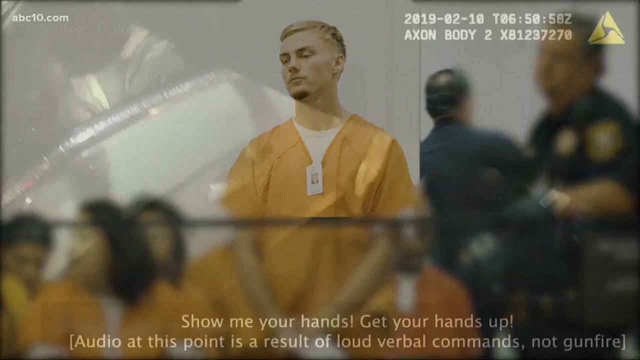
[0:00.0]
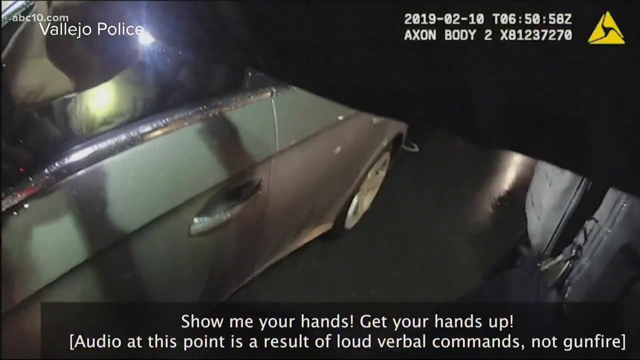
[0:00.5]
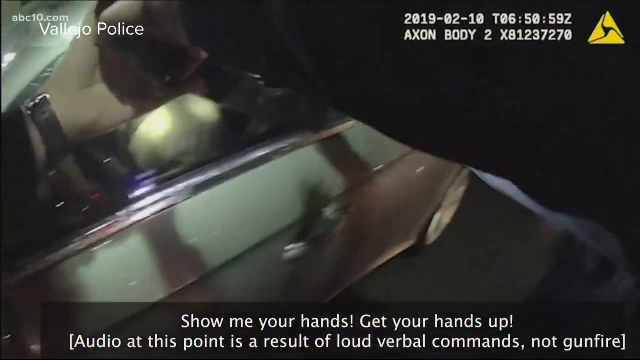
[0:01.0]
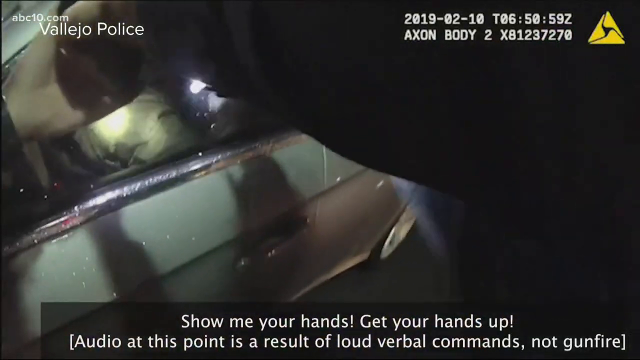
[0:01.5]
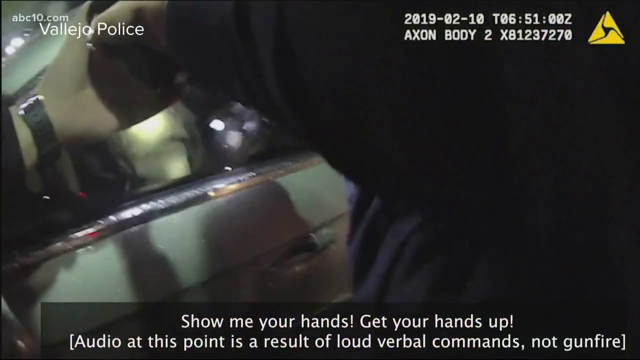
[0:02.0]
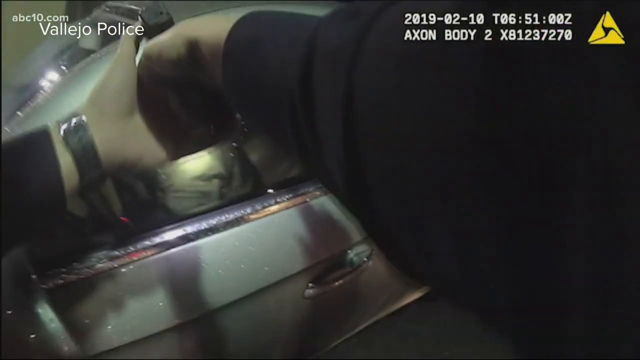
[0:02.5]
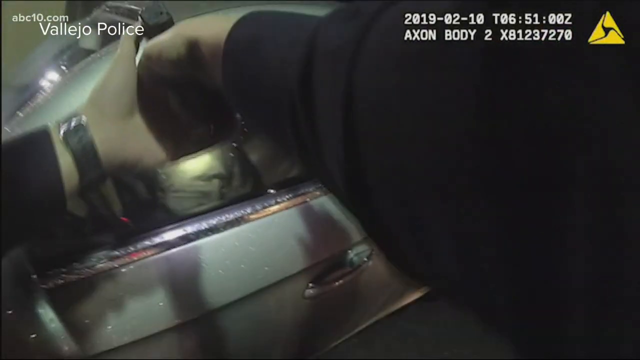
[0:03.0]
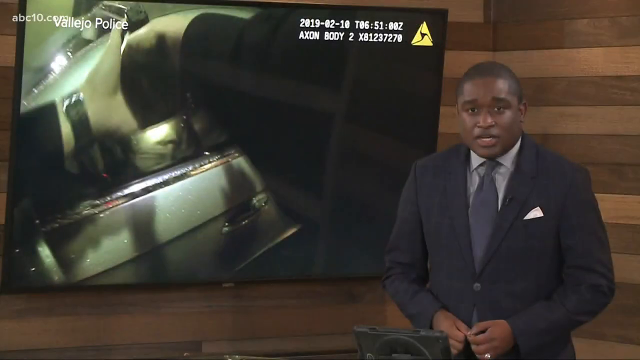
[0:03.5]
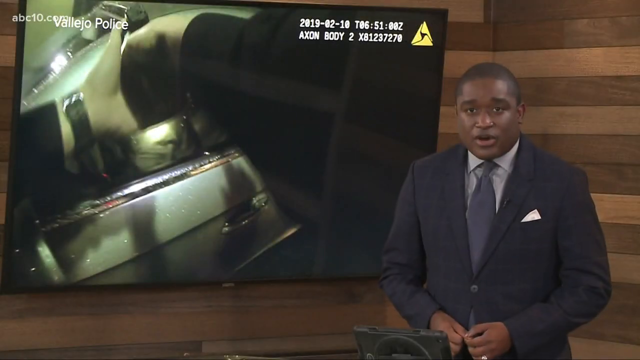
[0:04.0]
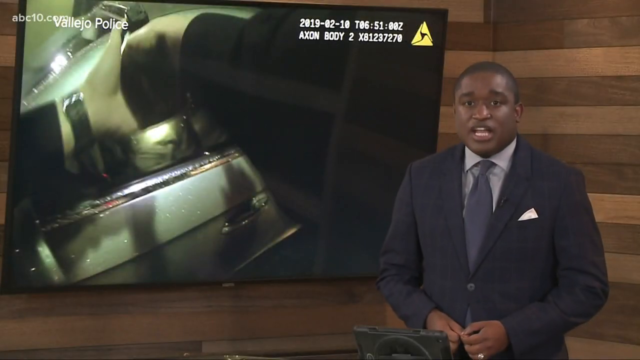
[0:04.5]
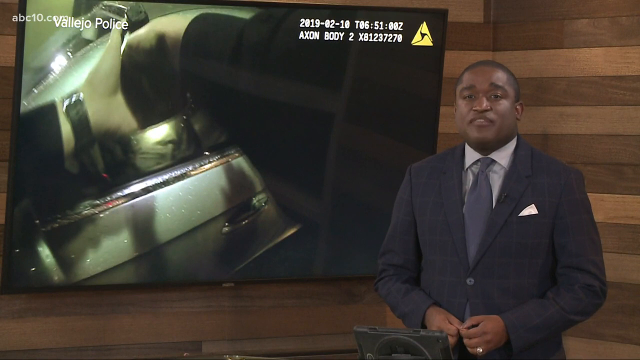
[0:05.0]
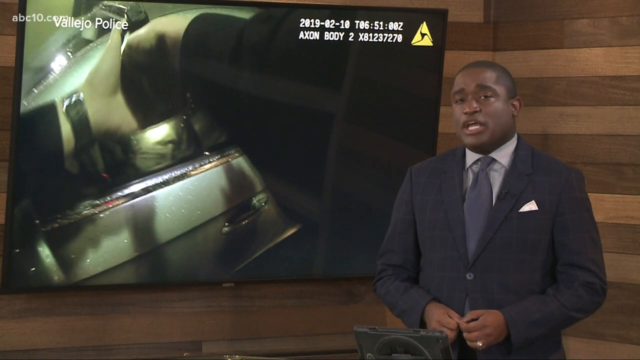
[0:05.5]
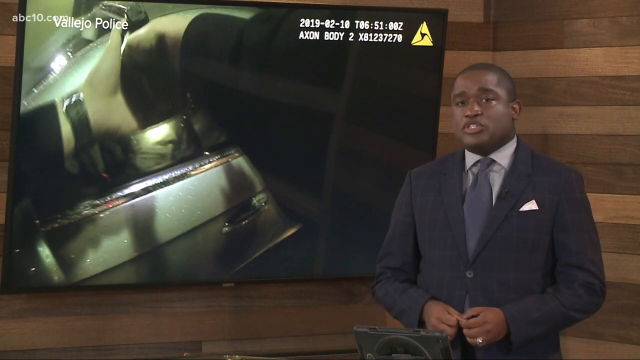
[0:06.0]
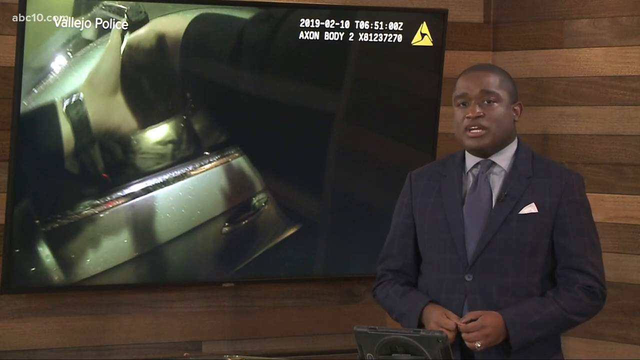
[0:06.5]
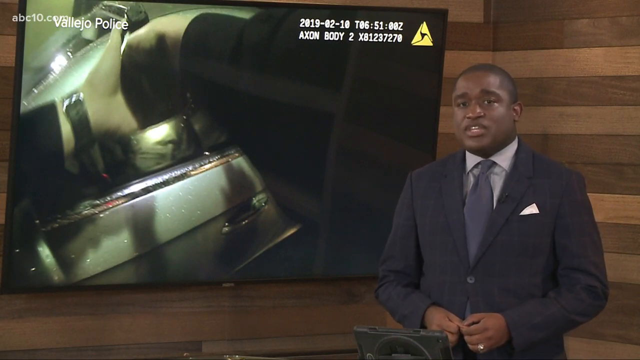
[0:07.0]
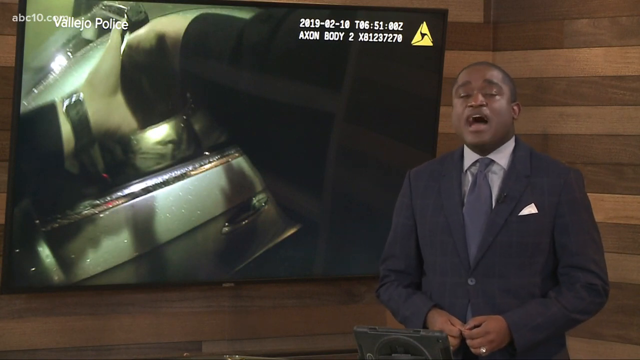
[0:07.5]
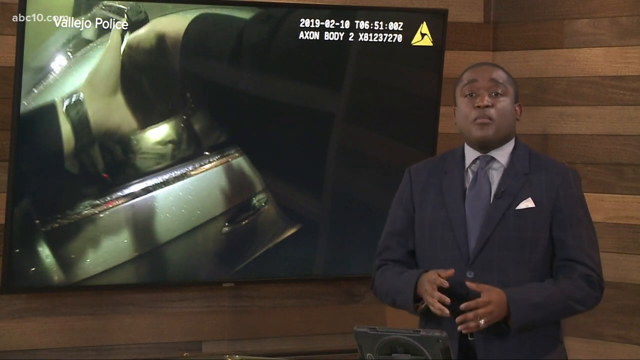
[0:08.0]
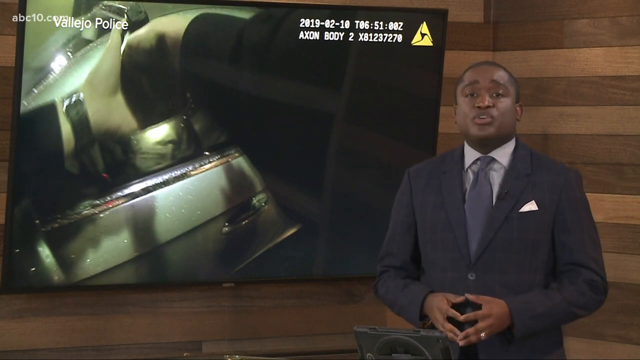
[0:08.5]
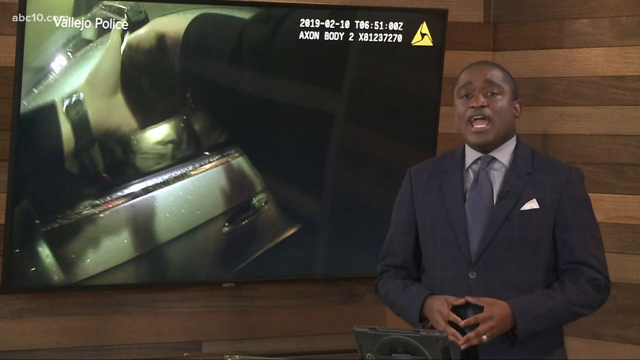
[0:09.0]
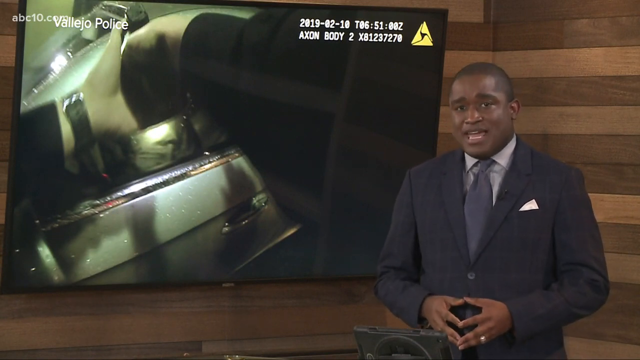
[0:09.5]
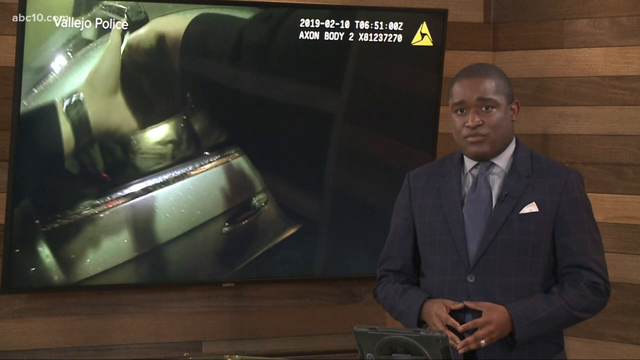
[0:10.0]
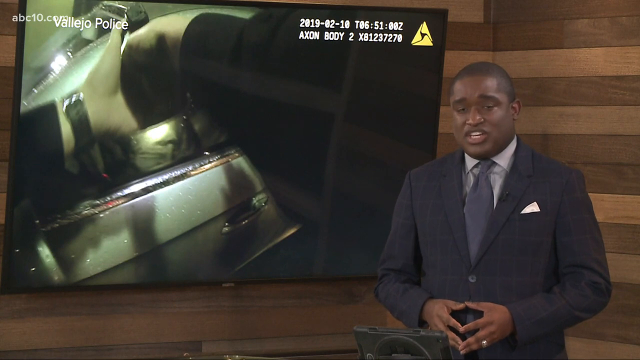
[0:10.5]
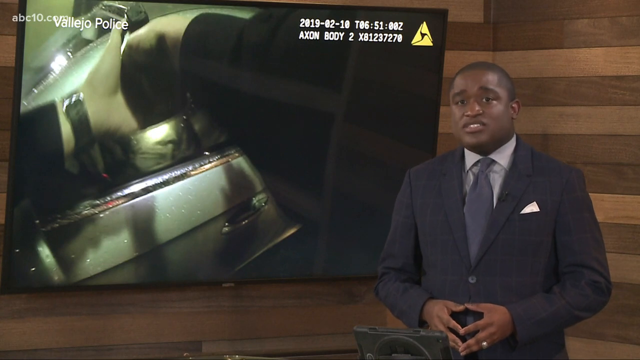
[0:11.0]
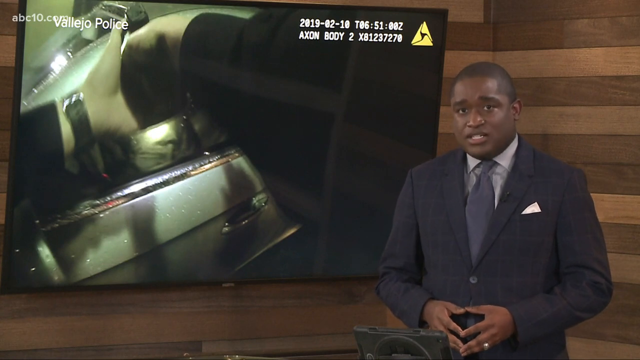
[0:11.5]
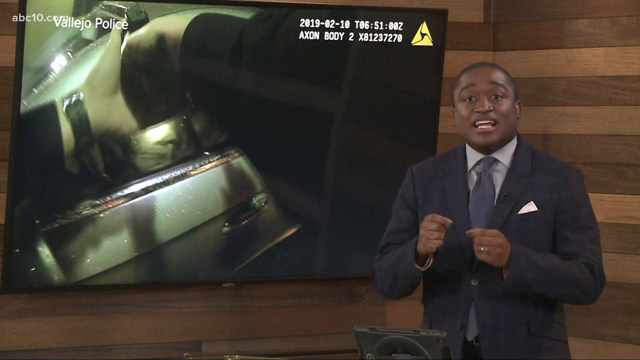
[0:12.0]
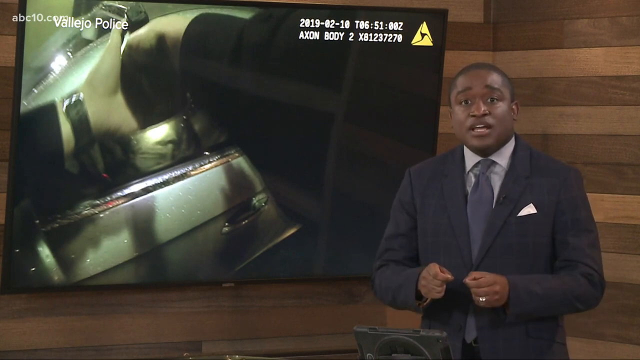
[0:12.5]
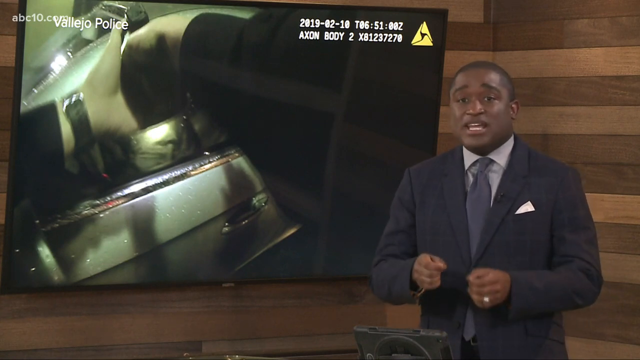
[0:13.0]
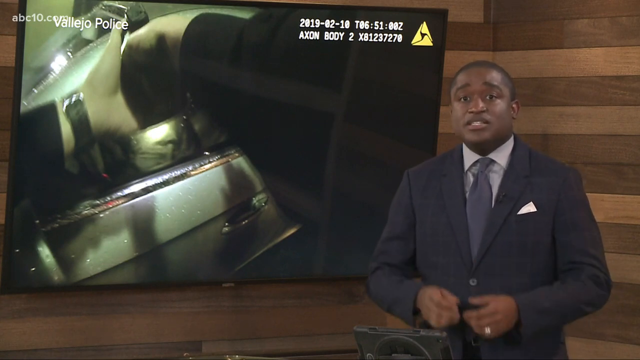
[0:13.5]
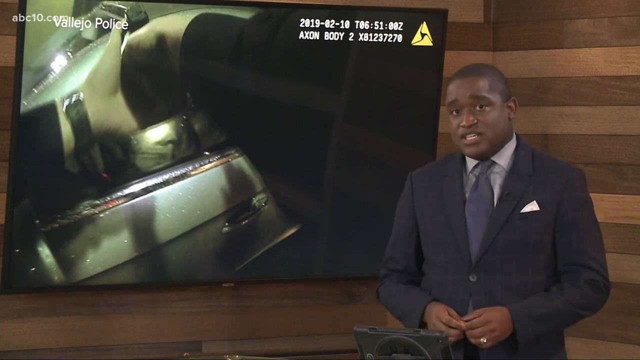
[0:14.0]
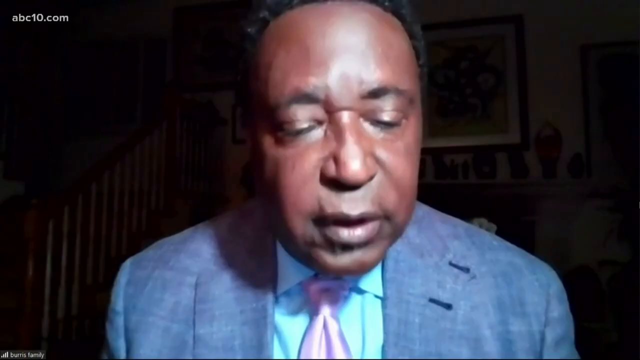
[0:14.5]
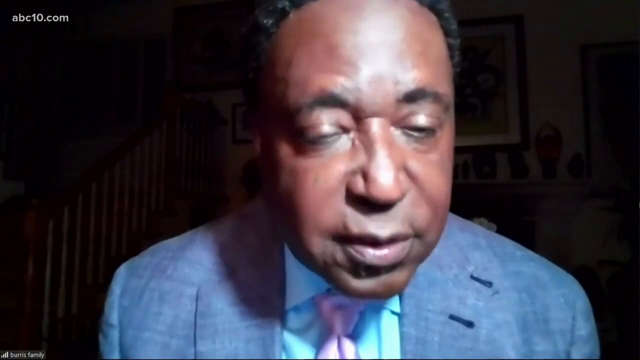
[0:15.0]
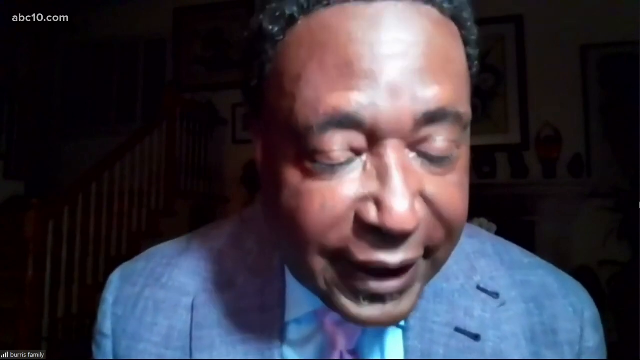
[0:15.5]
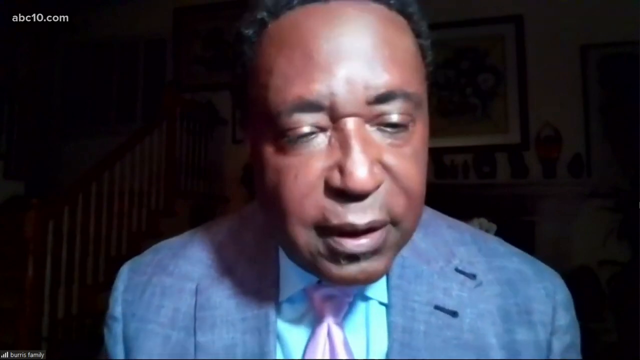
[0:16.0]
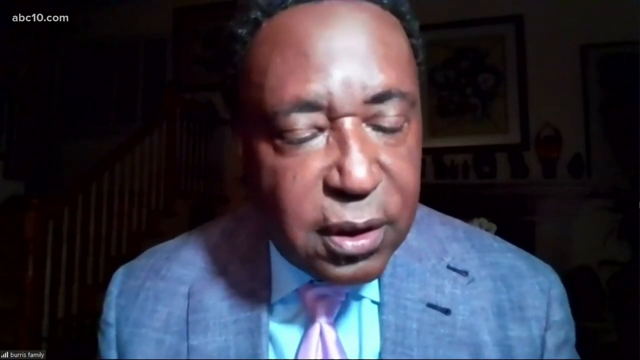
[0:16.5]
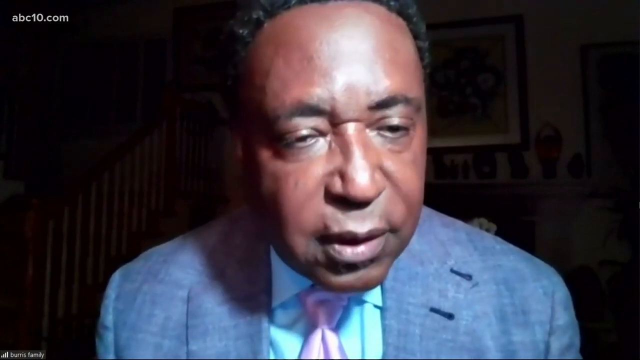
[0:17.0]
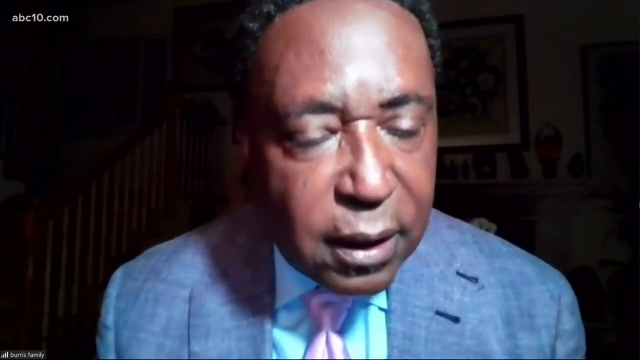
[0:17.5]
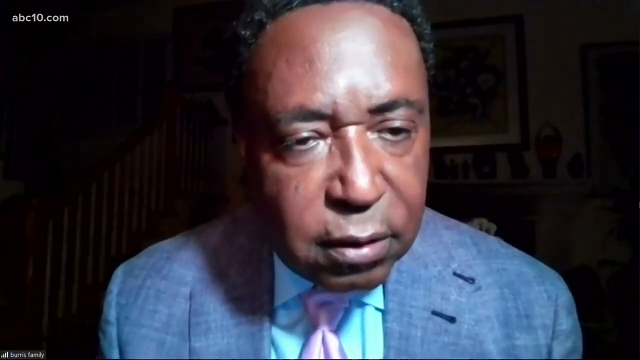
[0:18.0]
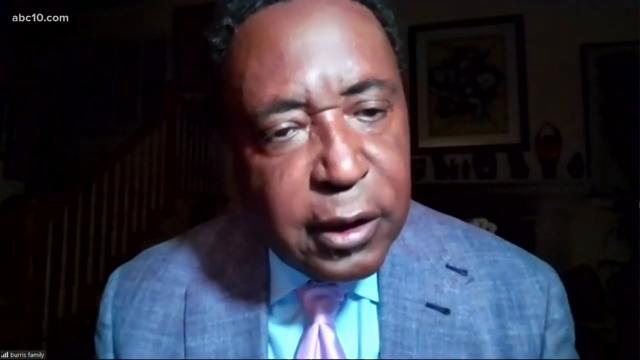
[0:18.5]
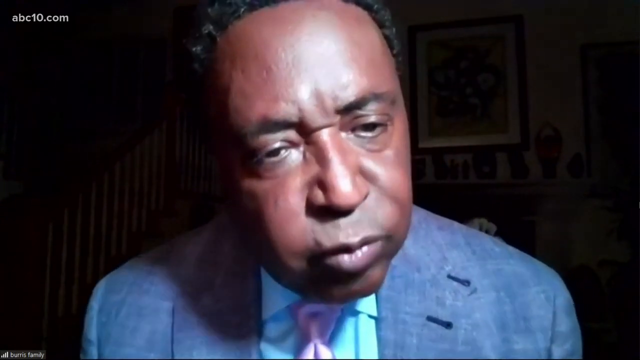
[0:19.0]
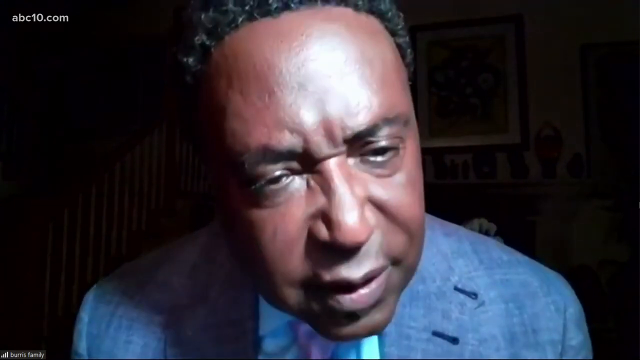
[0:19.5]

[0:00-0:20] This appears to be a news clip. In the upper left corner the text reads "abc10.com", and under that it says "Vallejo Police". The footage seems to come from a police camera, likely mounted on an officer's chest. An officer's hands hold a gun between them, pointed at a car window. There seems to be somebody in the car, moving a bit frantically. The video then cuts to a news anchor on the right side of the screen, with wood panels on the wall in the background and a large television screen to his left showing the same footage. The anchor is a Black man with very short hair, wearing a navy suit. He begins talking to the camera and looks quite serious and concerned. He gestures with both hands up and down toward the camera, then kind of keeps his fingertips together in front of his stomach. He then brings his hands together into what are almost fists and moves them up and down in front of his stomach.